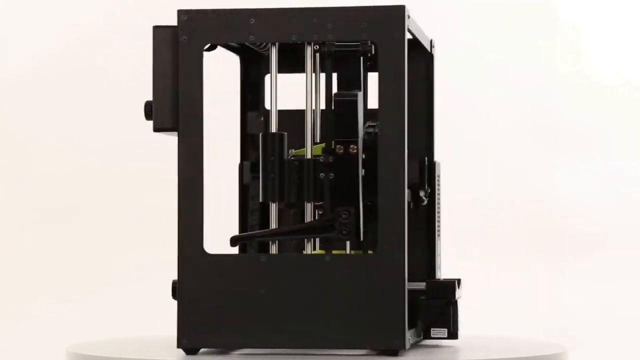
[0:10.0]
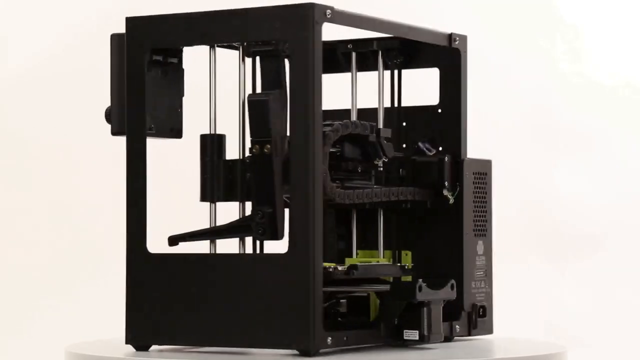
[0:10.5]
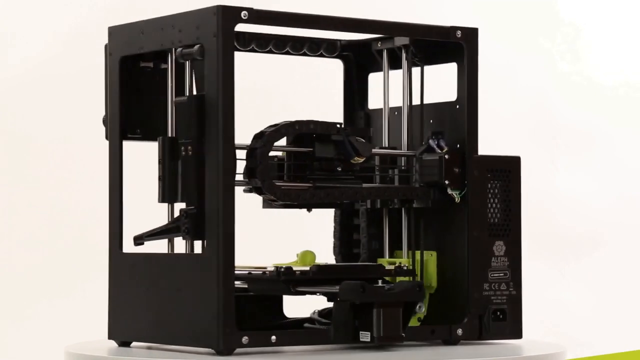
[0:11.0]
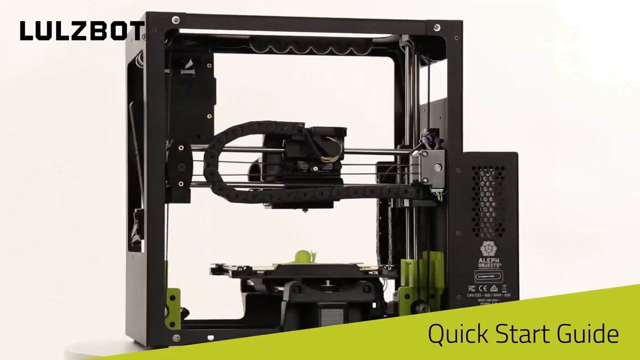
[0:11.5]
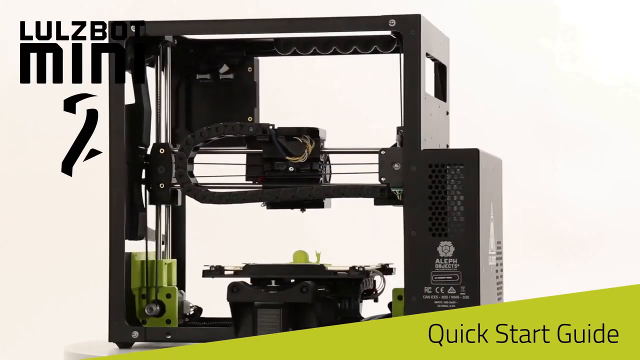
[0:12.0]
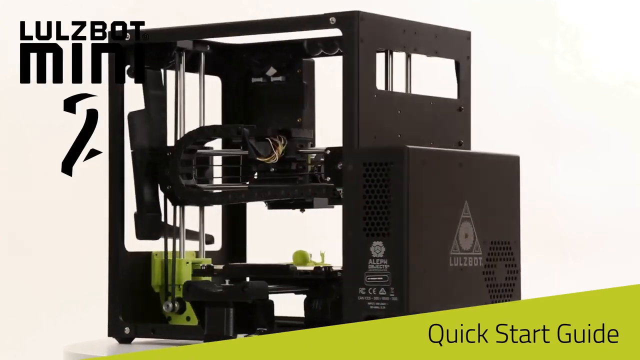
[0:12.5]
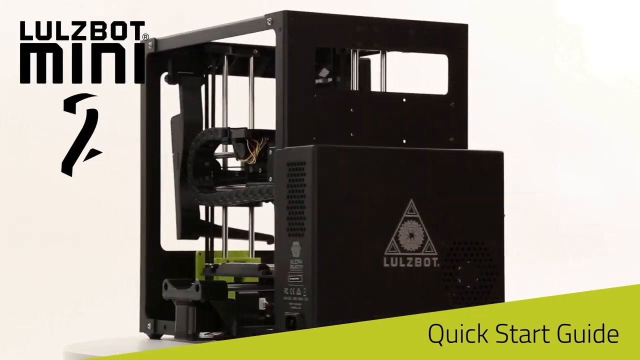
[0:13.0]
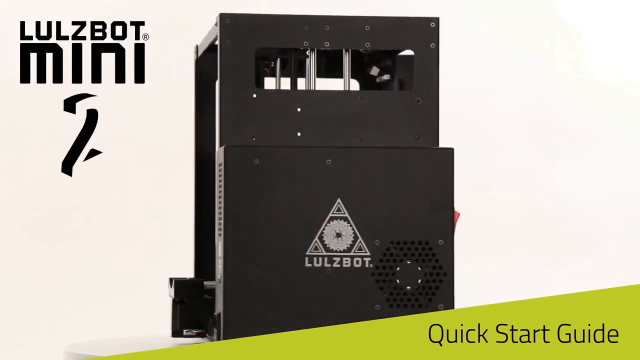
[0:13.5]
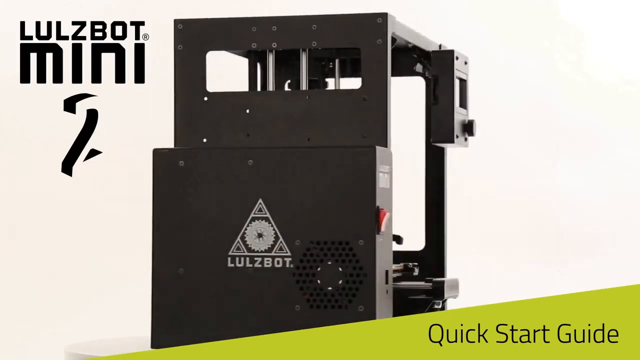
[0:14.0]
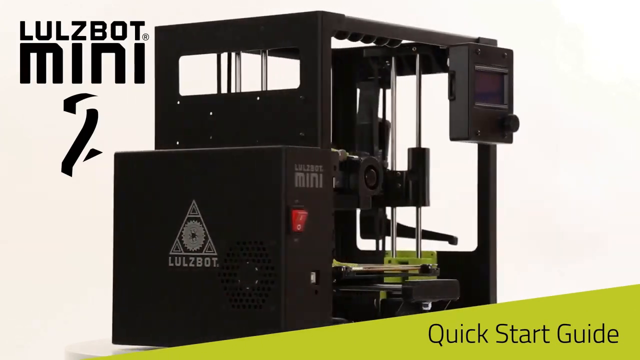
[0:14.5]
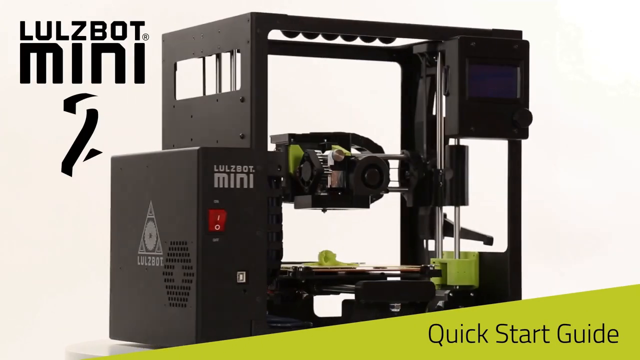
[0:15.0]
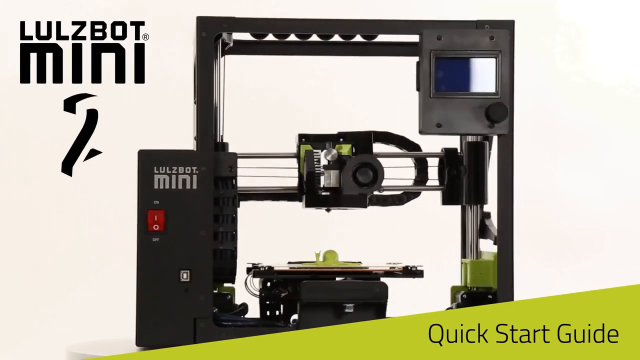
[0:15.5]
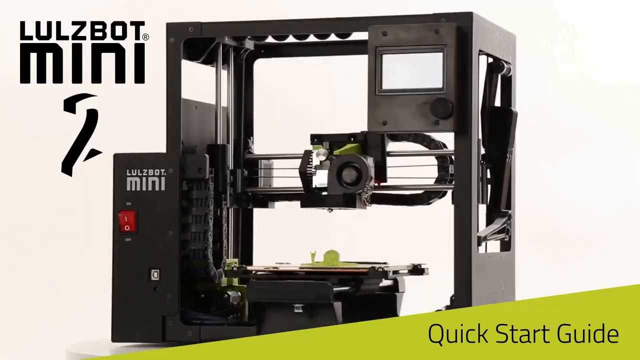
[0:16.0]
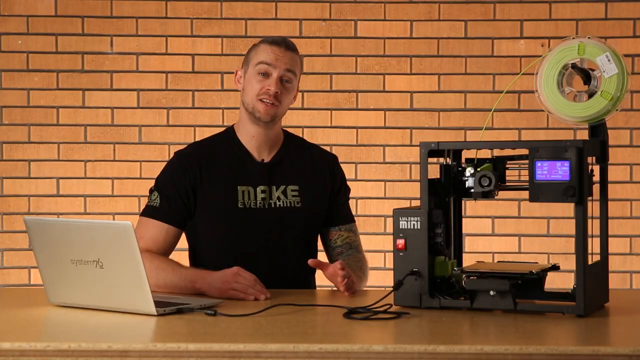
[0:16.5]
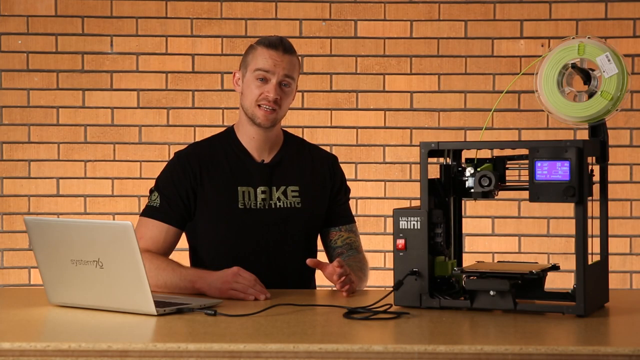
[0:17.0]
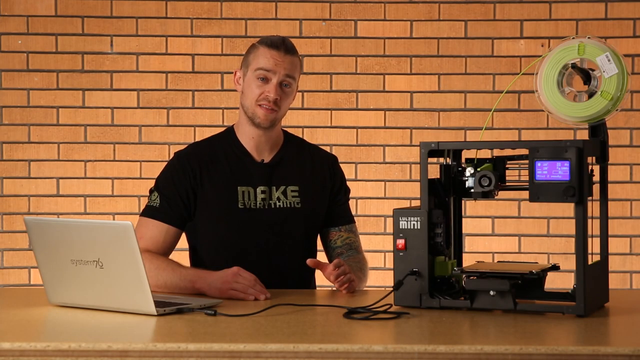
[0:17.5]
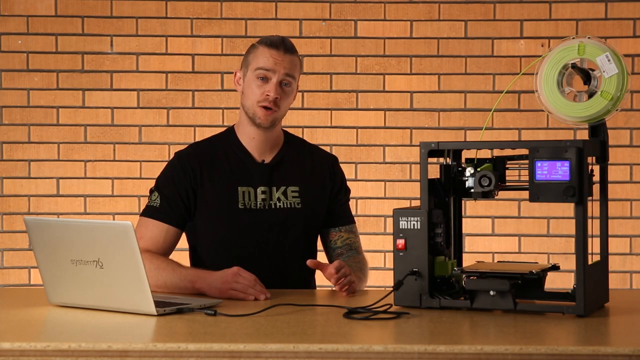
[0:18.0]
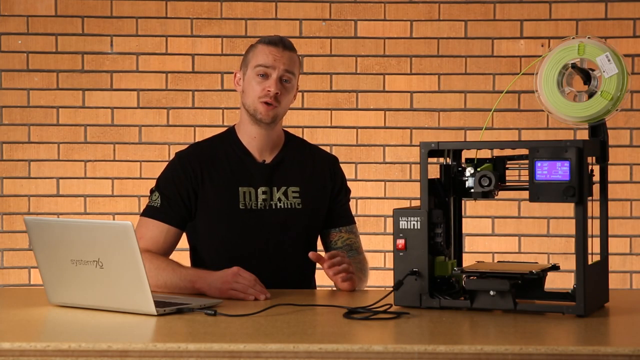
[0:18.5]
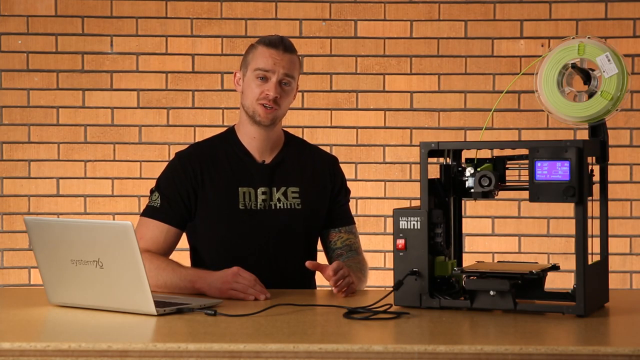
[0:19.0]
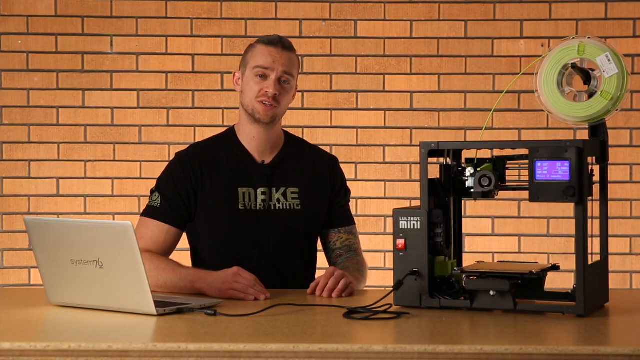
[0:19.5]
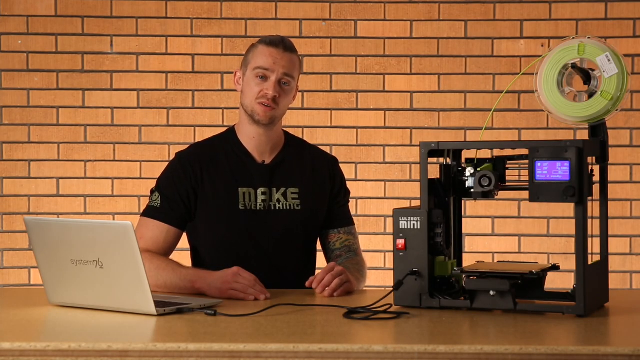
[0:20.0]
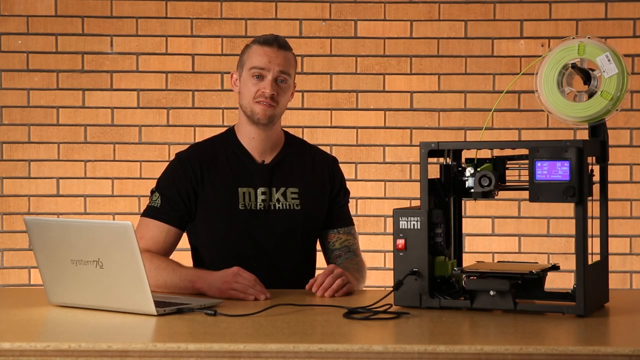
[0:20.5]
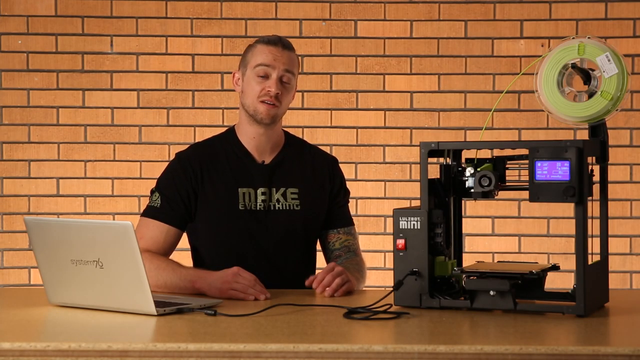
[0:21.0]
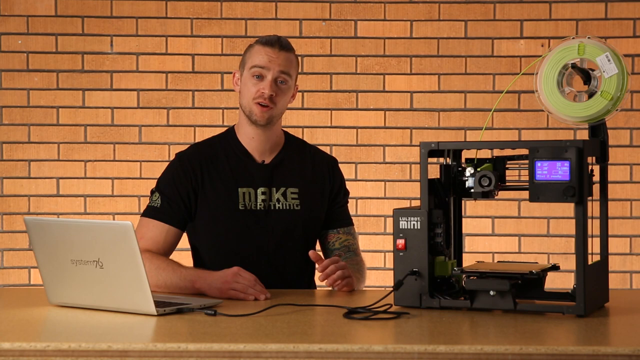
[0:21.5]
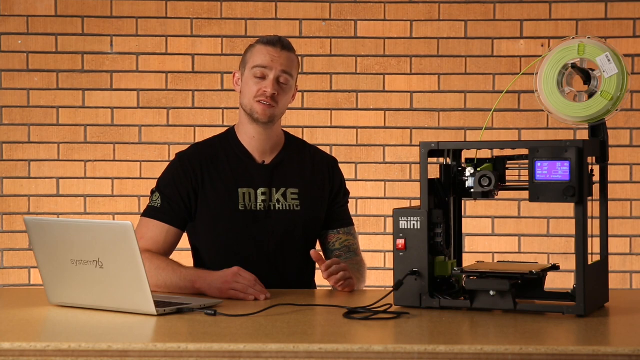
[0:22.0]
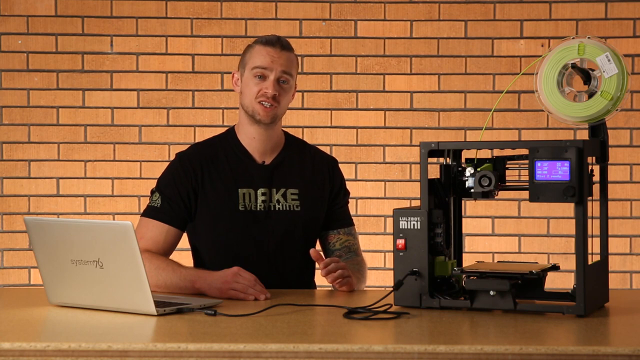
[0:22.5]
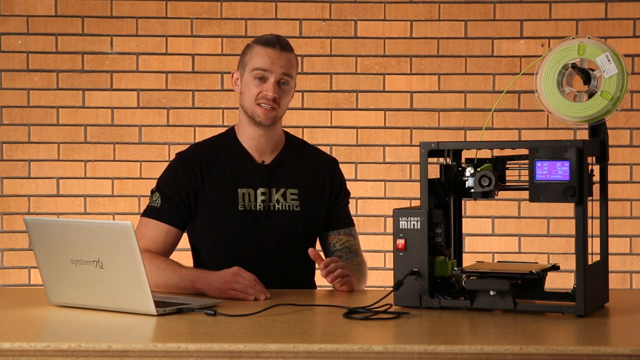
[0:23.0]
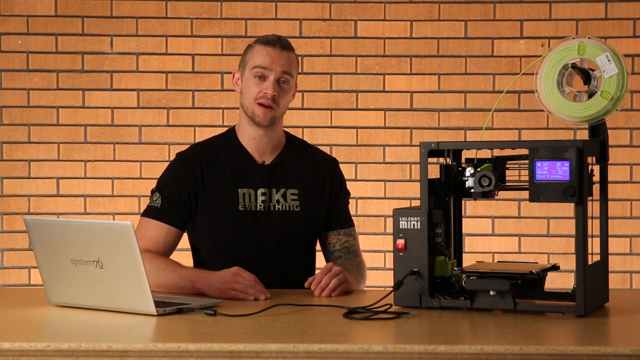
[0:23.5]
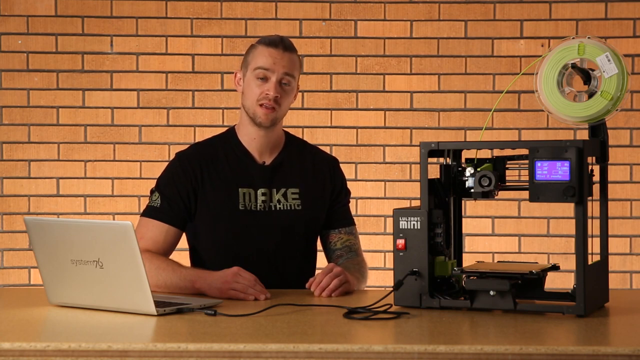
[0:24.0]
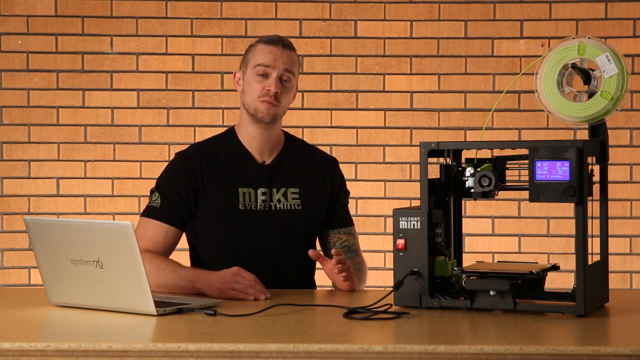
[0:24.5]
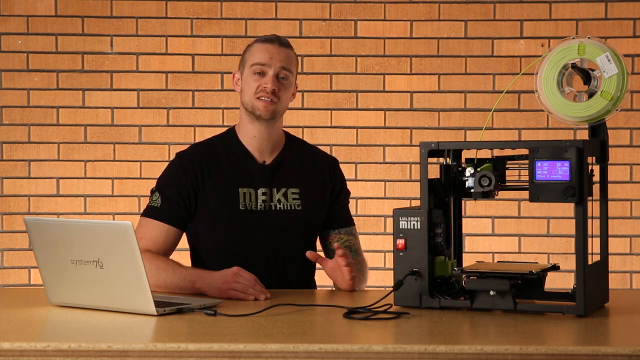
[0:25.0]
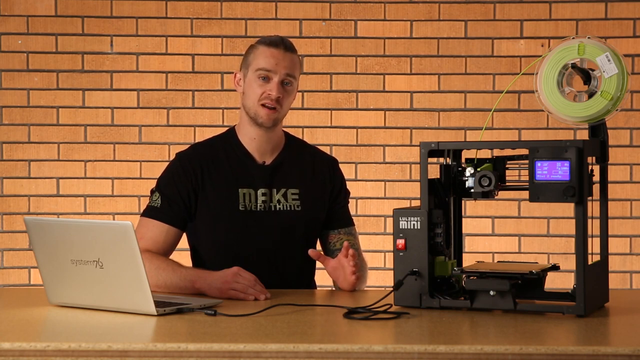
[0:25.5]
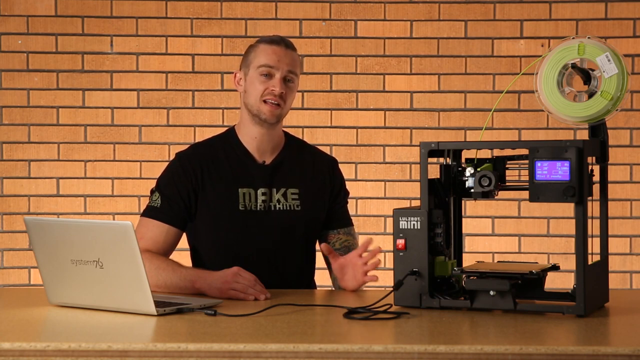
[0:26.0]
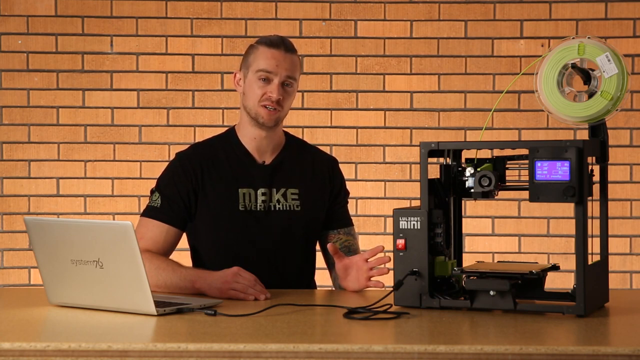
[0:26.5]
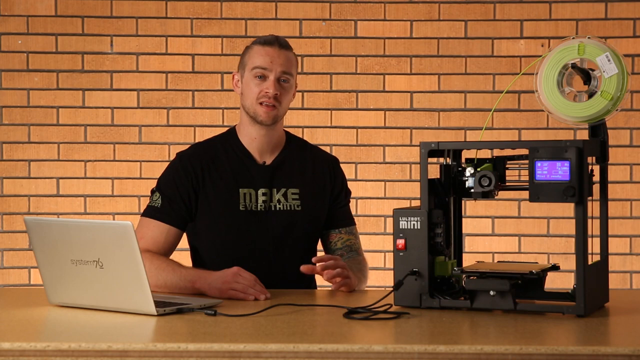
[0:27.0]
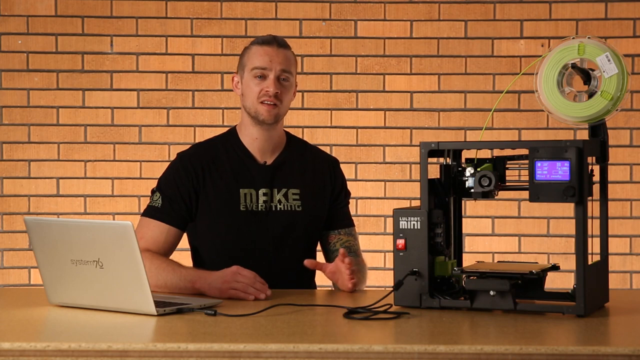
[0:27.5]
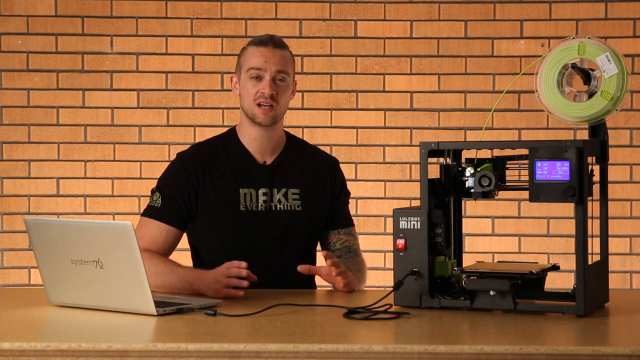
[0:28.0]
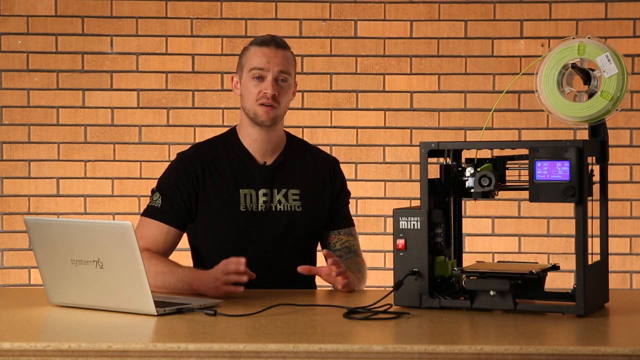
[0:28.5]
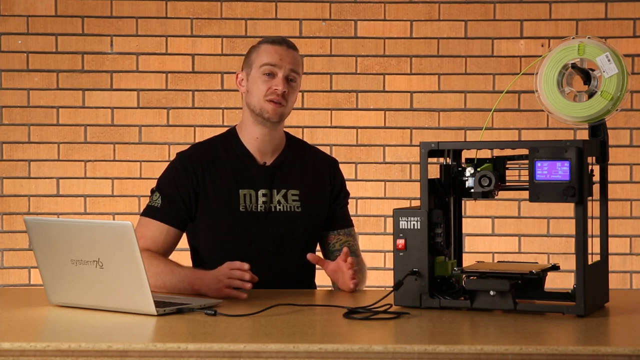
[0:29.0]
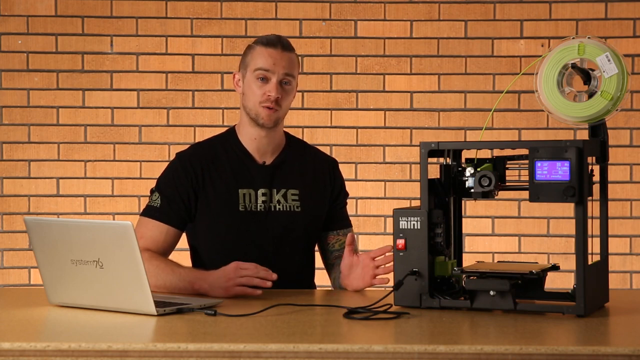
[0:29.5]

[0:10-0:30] The LulzBot keeps twirling, so it is never shown in action; it looks like a 3D printer. The young man next to the device continues to speak, and behind him is a faux brick wall. Attached to the upper right of the device is some green looped wire leading to a camera that is also part of the device. There is a red button on the left of the box that says "LulzBot Mini". A screen readout on the upper left of the device is too far away to read, but it is on and seems operational. On the bottom of the device is a flat area, not unlike the glass part of a scanner. The green material in the upper right may be a moldable material, probably plasticine or plastic, that the machine uses to make things.